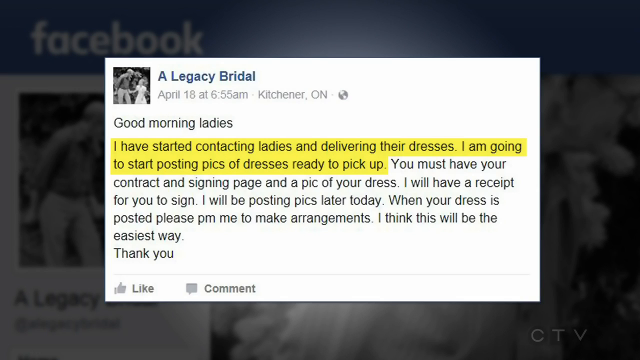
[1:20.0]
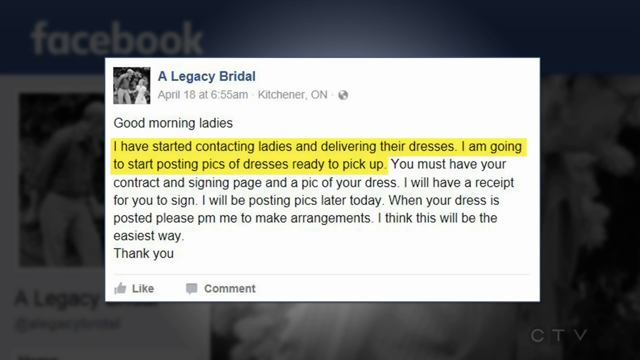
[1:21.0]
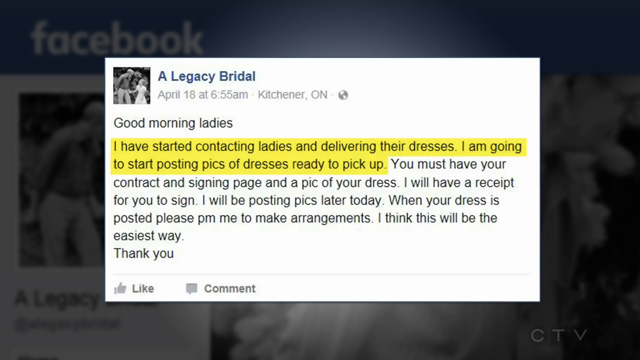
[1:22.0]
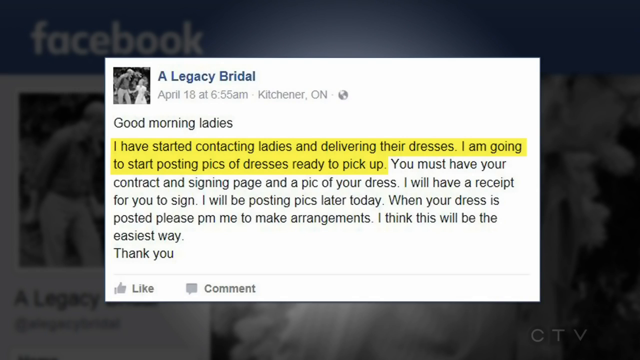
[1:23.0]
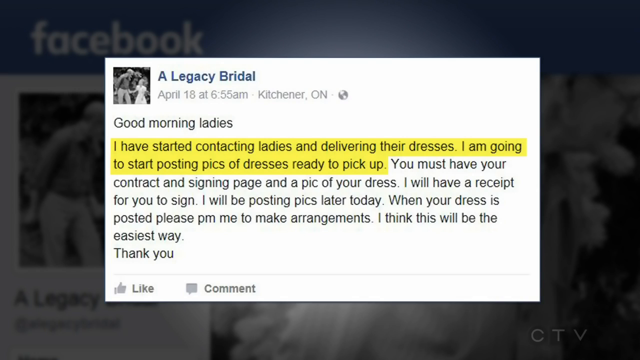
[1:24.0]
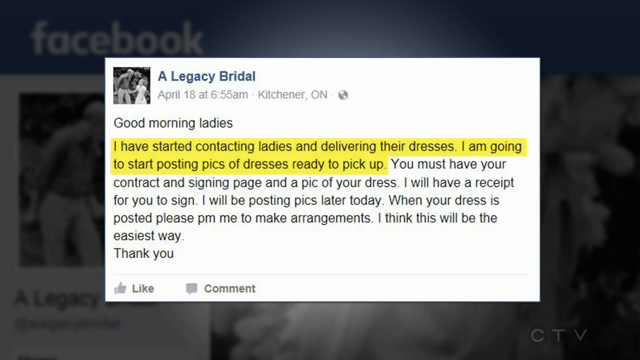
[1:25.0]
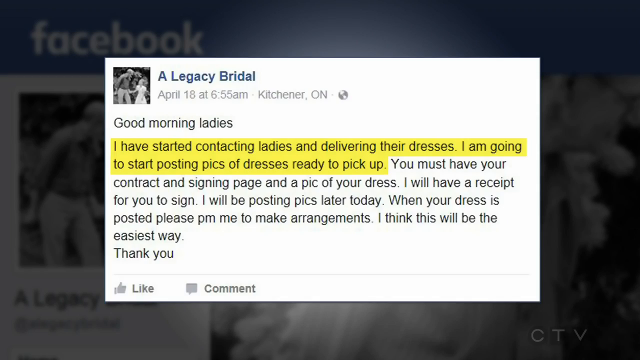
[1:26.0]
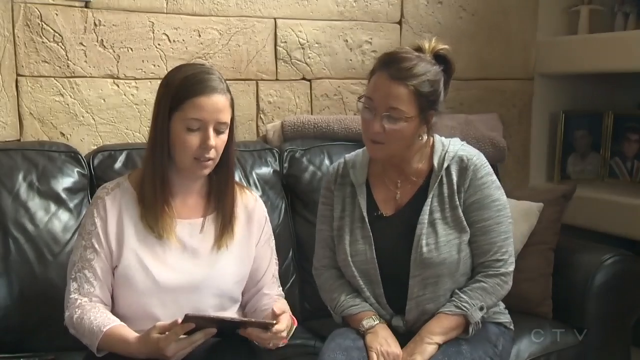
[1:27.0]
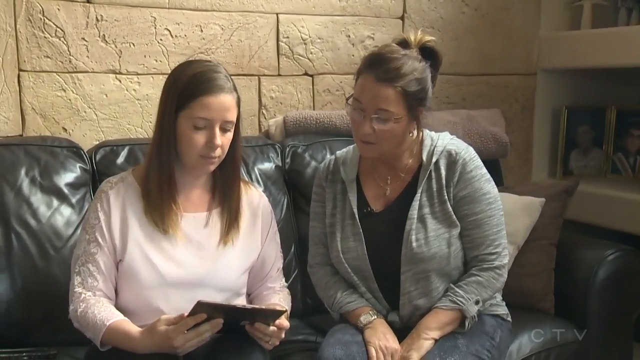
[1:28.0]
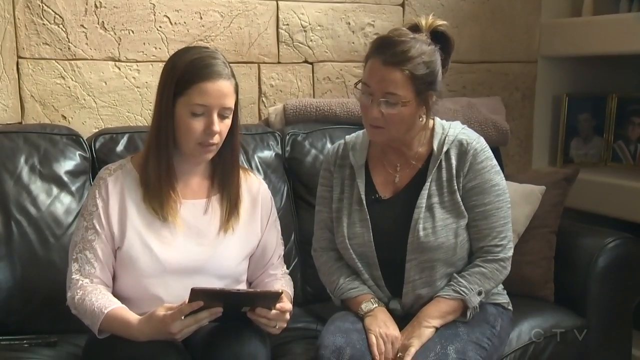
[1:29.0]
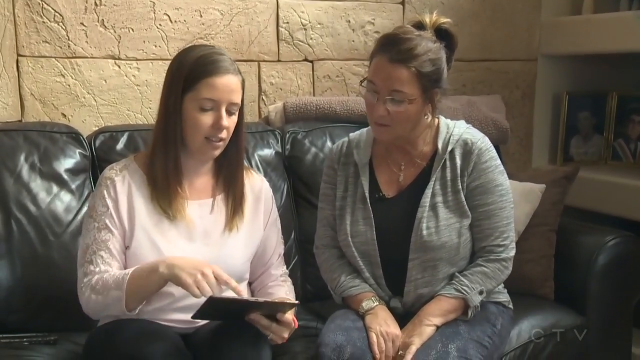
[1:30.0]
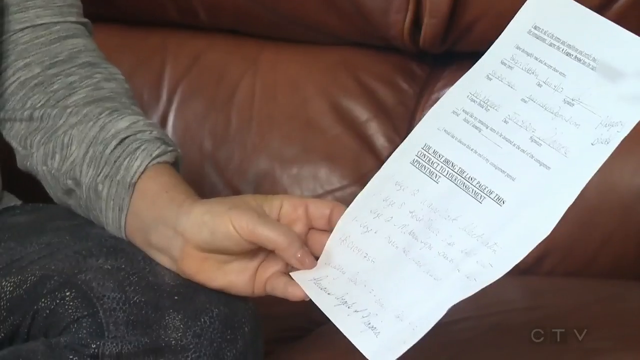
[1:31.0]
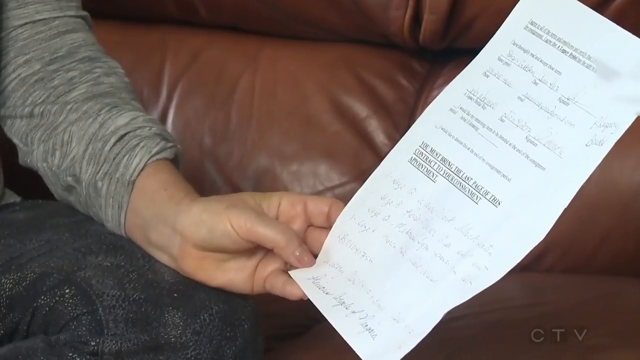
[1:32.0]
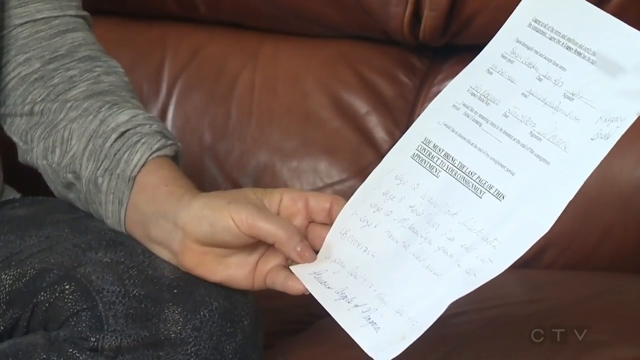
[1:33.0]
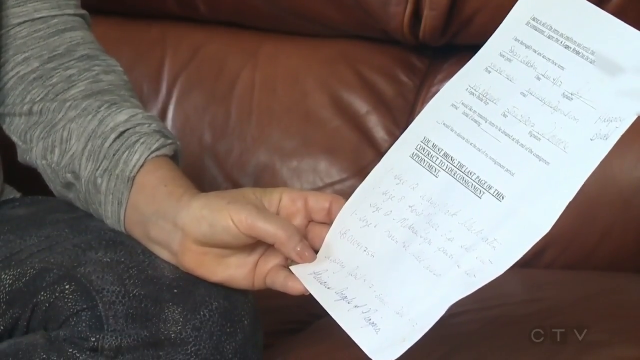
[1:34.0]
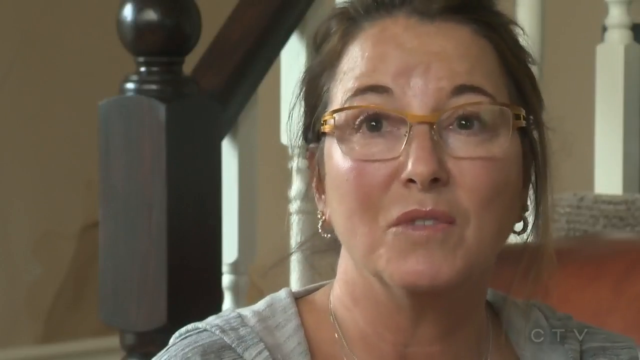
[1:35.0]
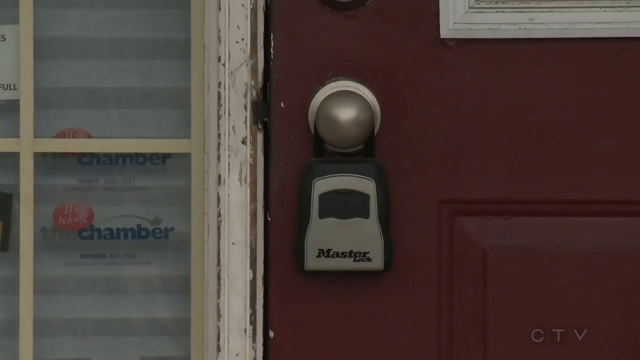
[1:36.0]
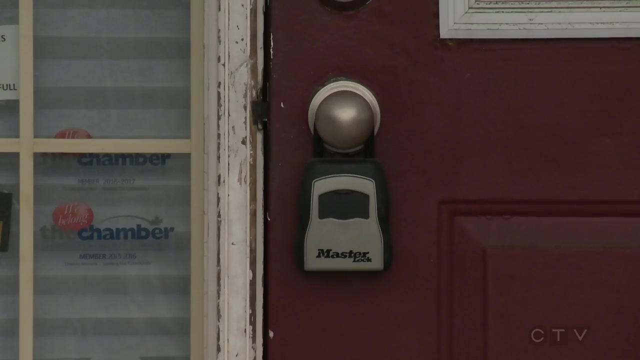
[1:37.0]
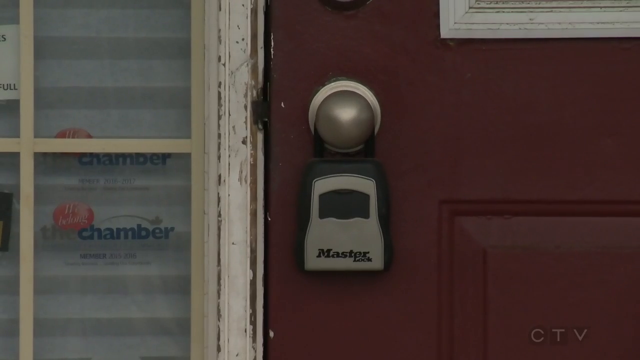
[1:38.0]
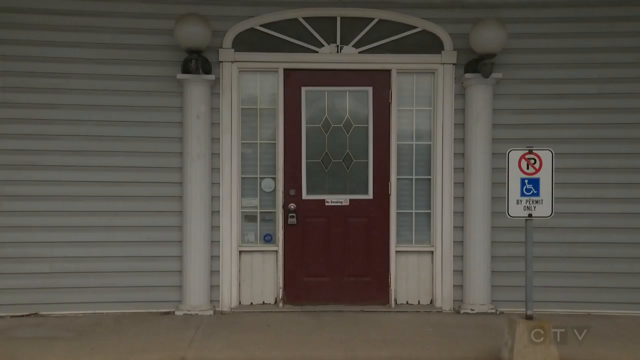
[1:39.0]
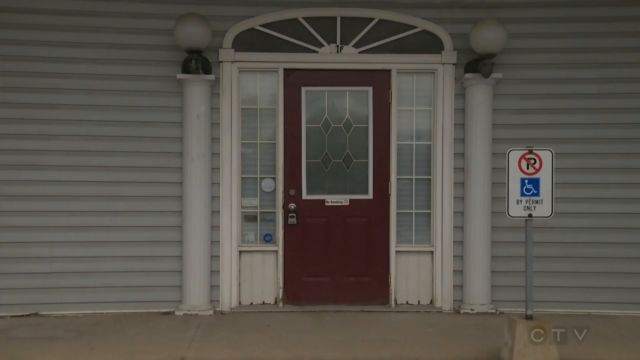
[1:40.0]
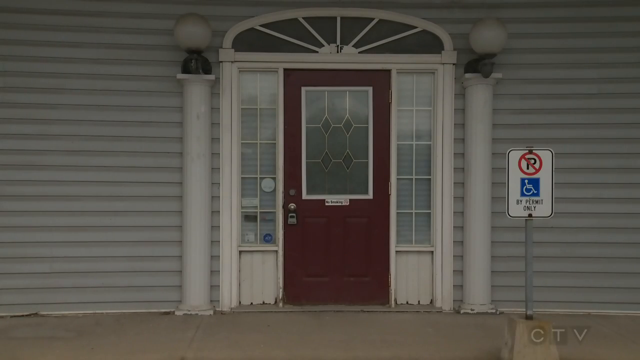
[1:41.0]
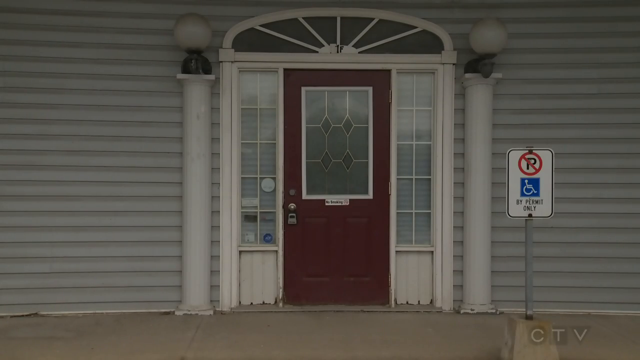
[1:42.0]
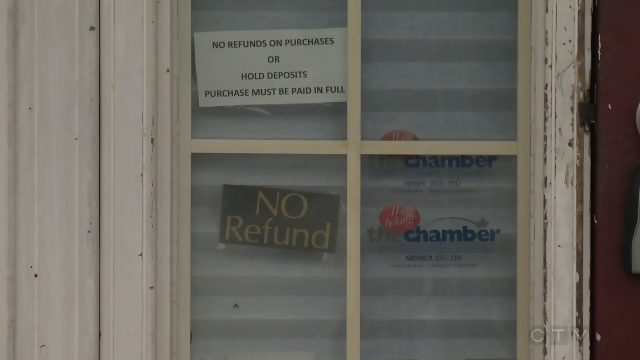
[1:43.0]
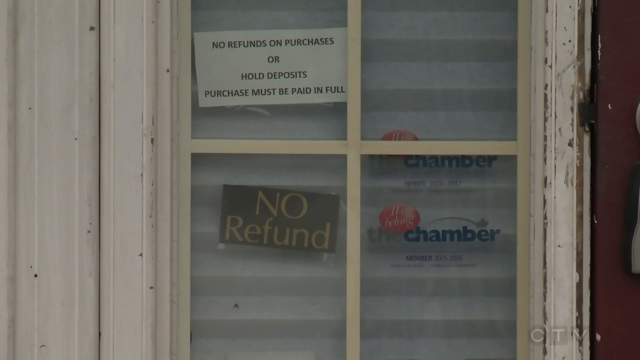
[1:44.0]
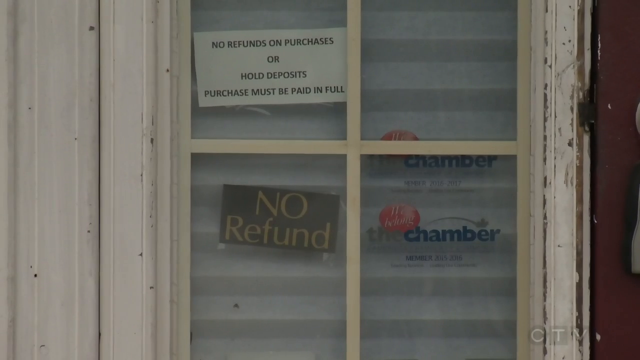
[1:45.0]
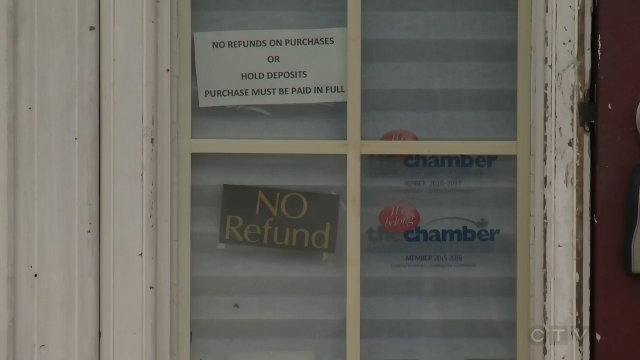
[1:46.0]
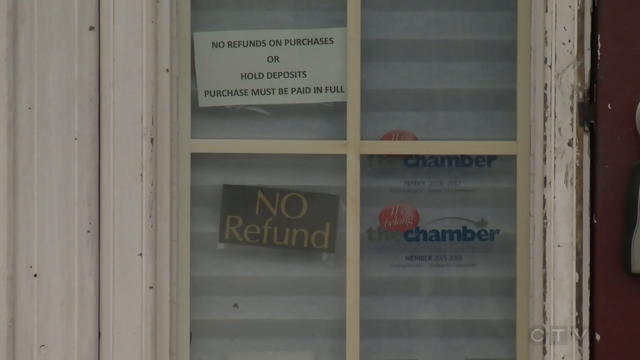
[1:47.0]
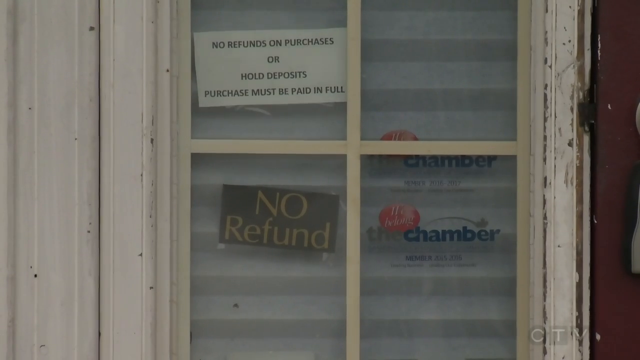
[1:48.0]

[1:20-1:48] A Facebook post from legacy bridal opens with "Good morning, ladies." A section highlighted in yellow reads: "I have started contacting ladies and delivering their dresses. I'm going to start posting pics of dresses ready to pick up." After the highlighted section, it continues: "You must have your contract signing page and a pic of your" and ends with "I think this will be the easiest way. Thank you." The post stays on screen for a while, with the CTV logo at the bottom of the screen, and it has no likes or posts. Two women sit on a leather couch, talking with one another and pointing at what appears to be the receipt from the bridal place. Another woman talks, and a master lock is shown on a red door. The view zooms out, apparently showing what the salon currently looks like or previously looked like. A sign reads "no refunds on purchases or hold deposits must be purchased and paid in full".